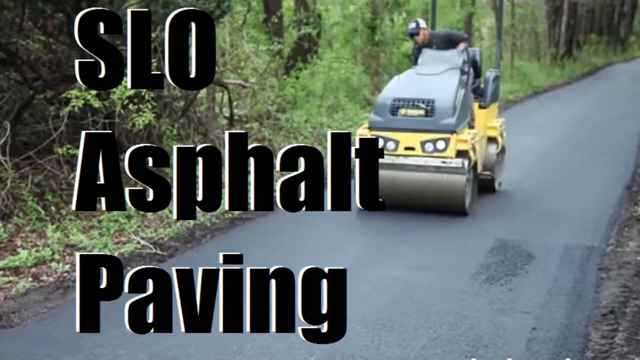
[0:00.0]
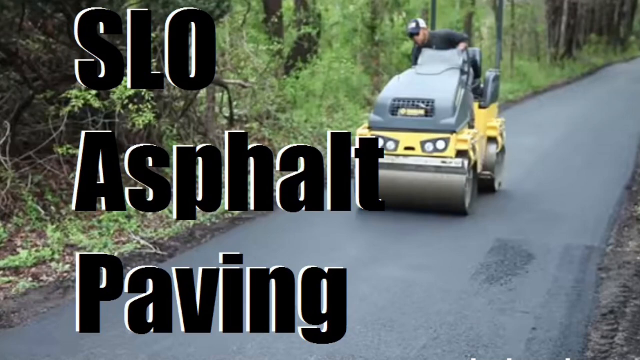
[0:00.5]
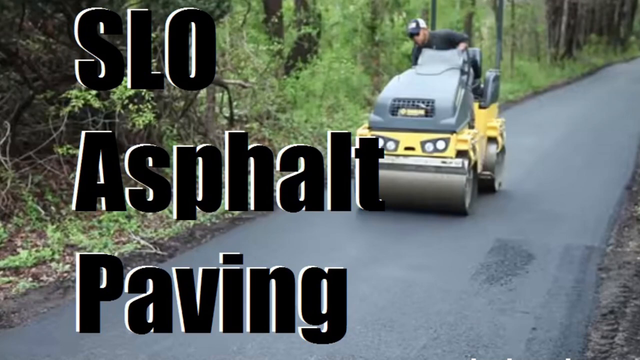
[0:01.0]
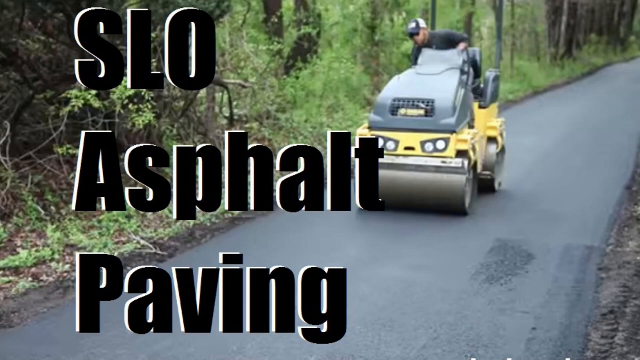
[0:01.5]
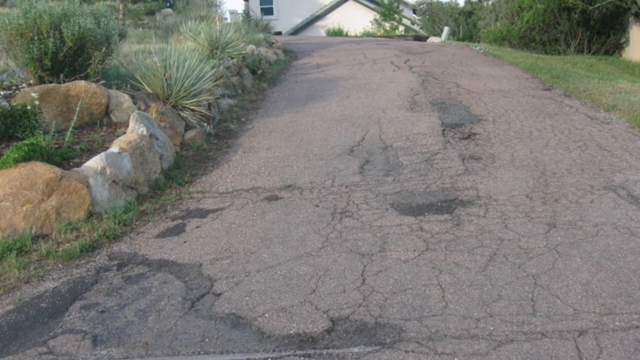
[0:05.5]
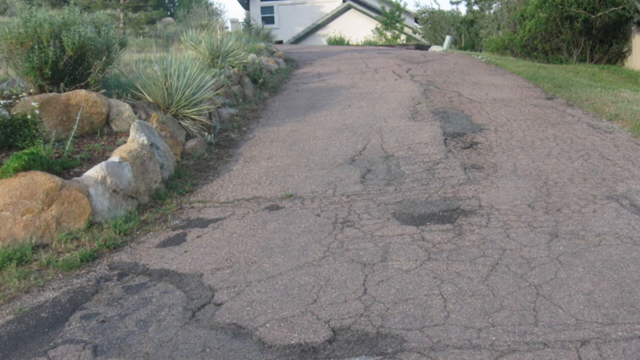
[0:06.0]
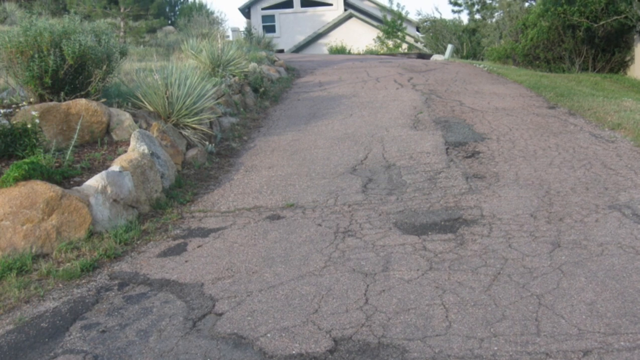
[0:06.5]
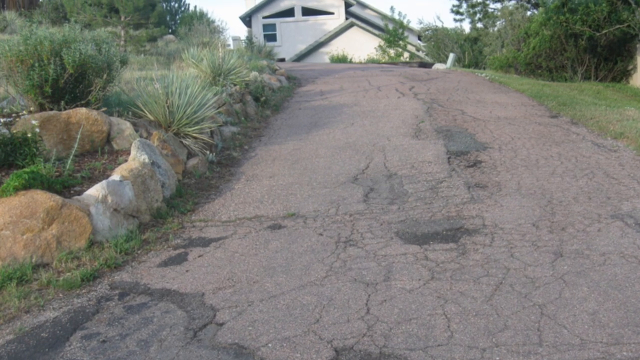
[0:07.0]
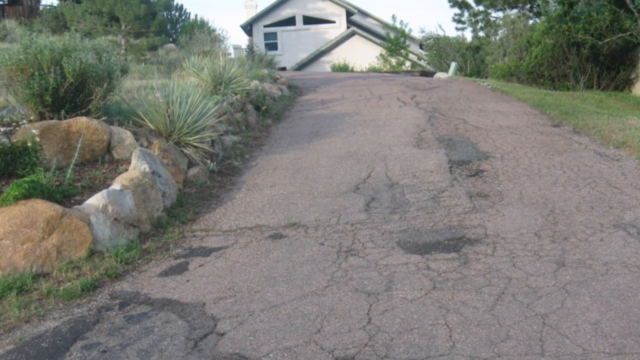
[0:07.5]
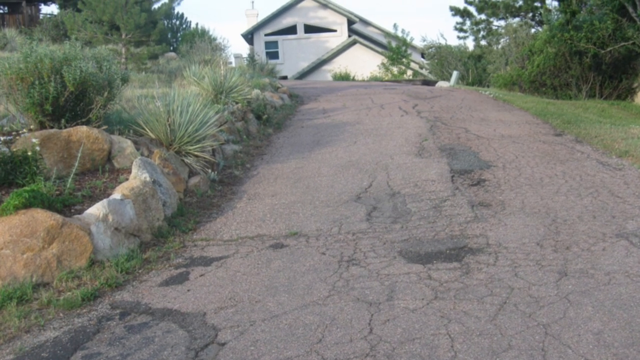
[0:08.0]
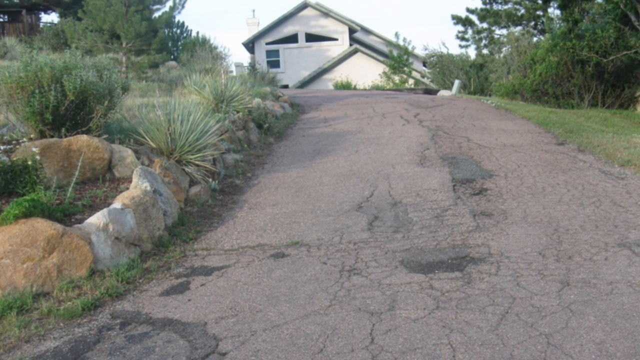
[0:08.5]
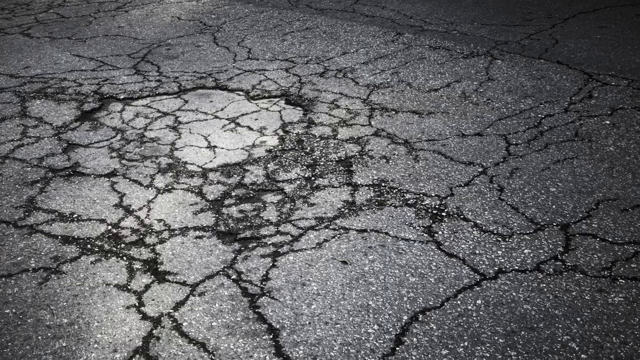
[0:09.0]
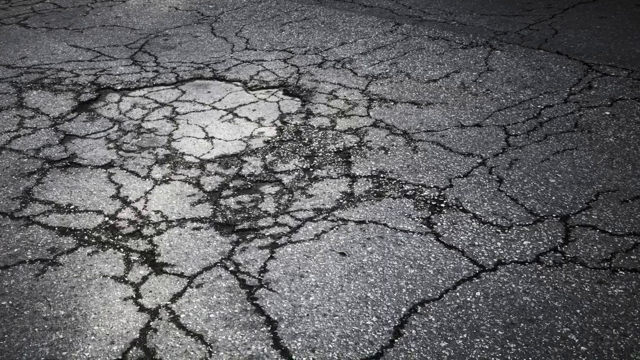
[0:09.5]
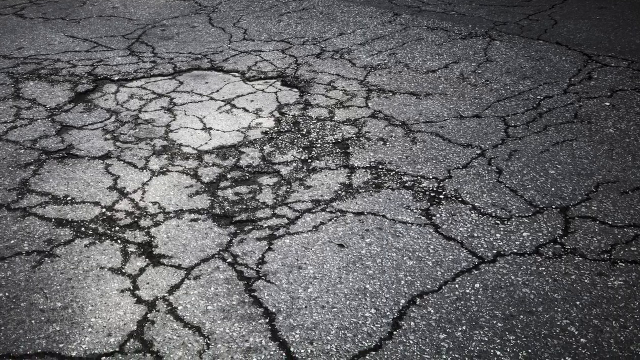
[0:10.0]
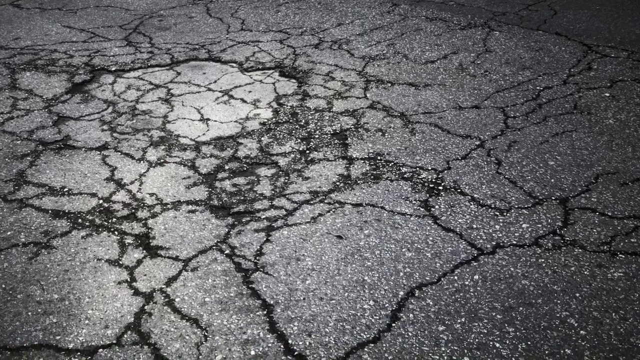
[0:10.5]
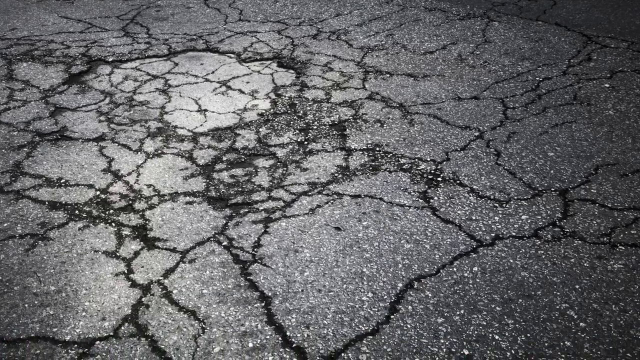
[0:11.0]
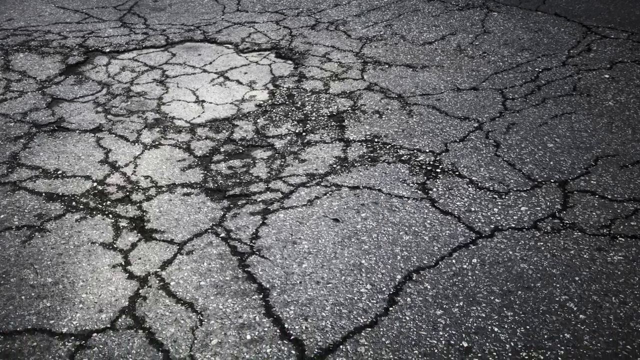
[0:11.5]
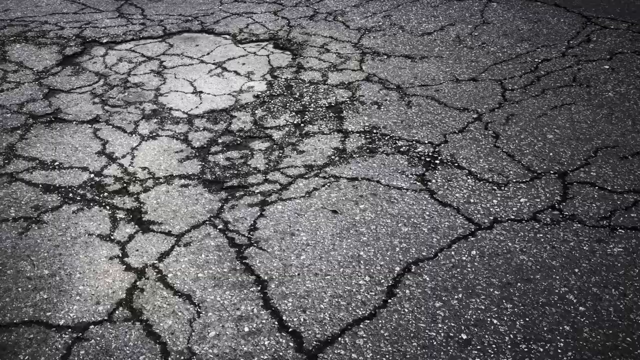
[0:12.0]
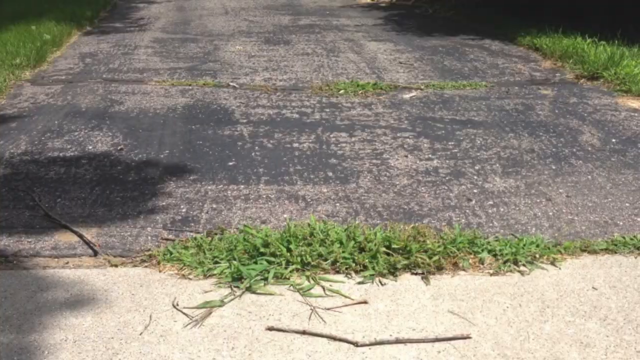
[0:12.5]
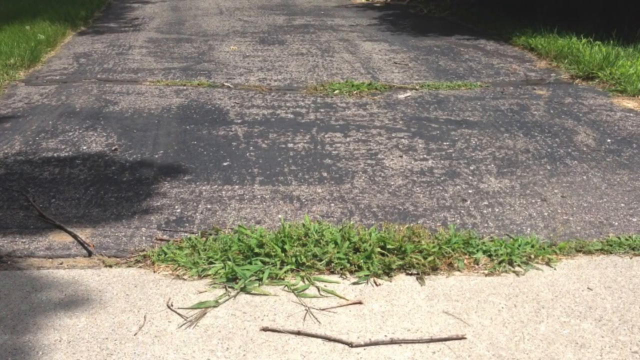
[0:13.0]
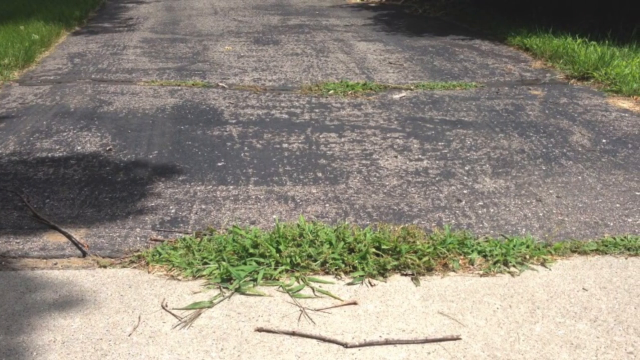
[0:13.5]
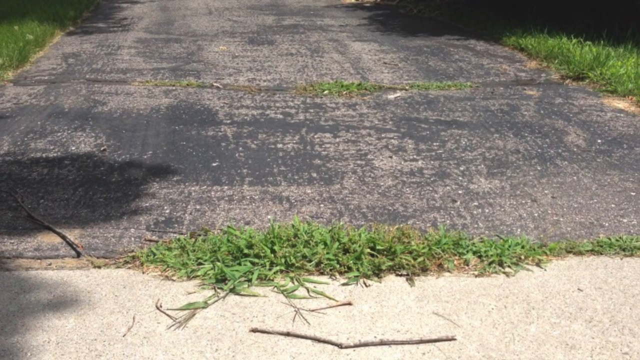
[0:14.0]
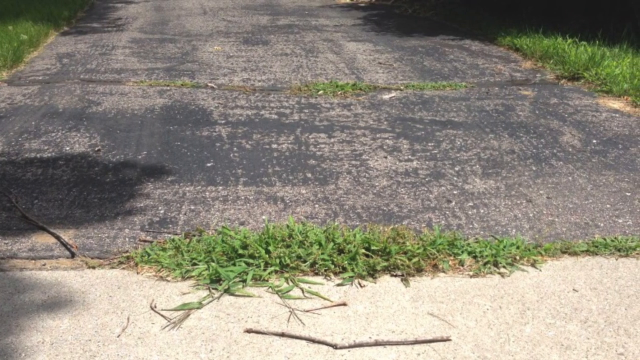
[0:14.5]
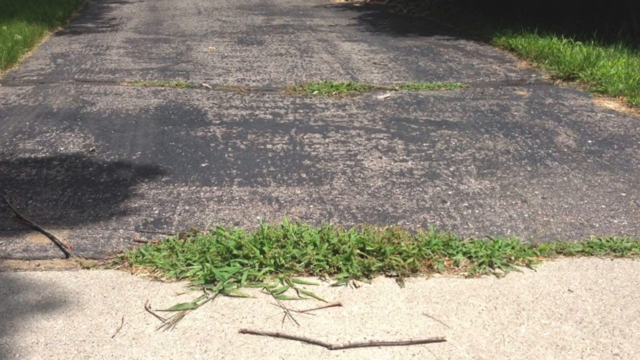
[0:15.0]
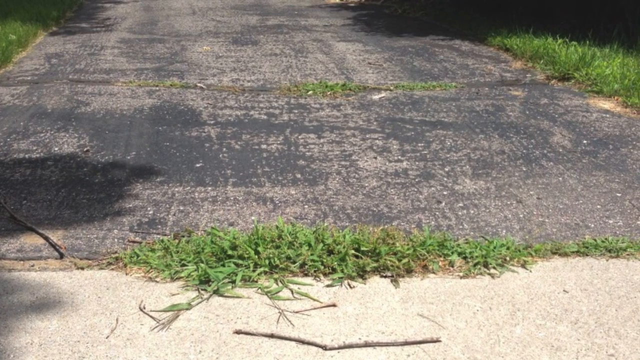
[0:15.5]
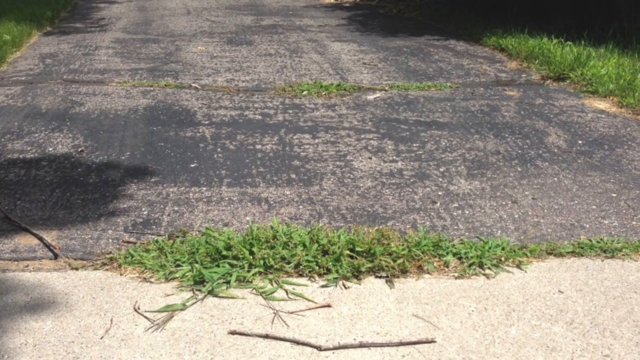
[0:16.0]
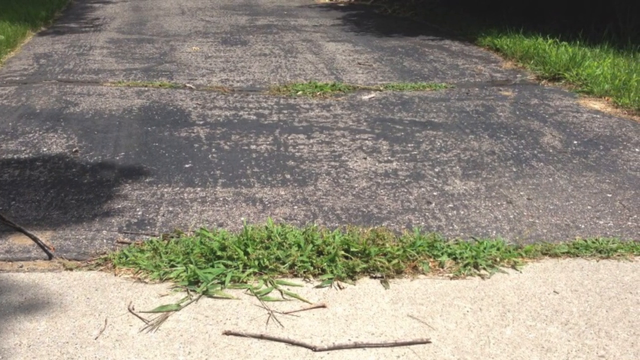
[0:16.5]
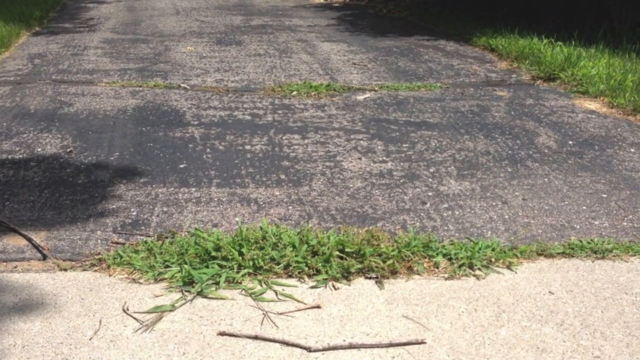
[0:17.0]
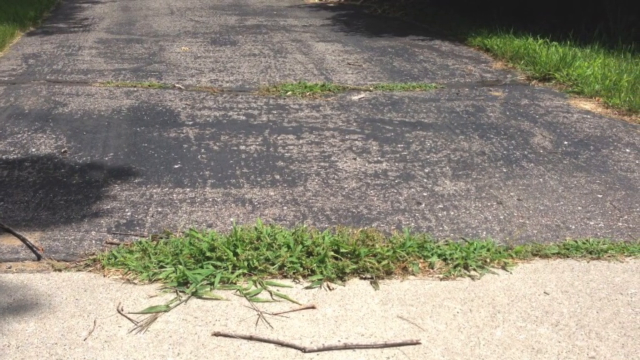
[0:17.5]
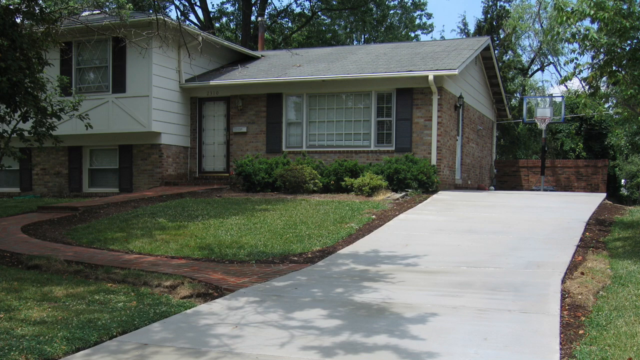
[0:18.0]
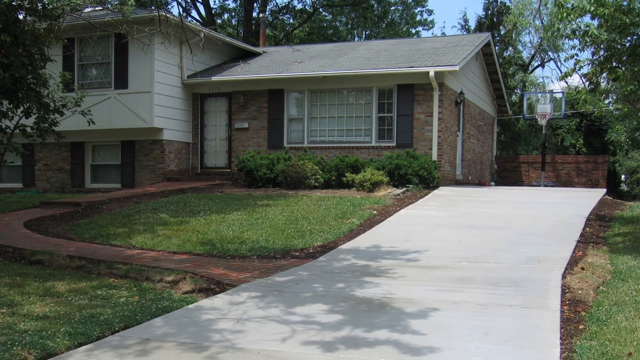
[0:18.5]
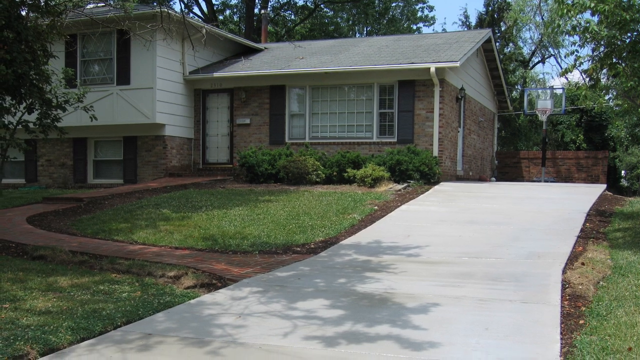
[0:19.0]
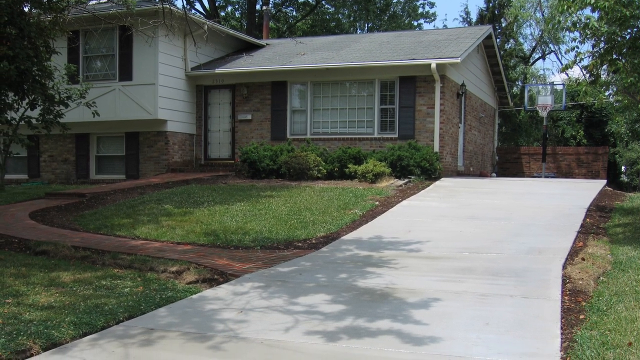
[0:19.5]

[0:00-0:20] A road, a house and trees are visible. The tarred road is not smooth. There is grass inside the premises, and the house is double-storey. Workers are trying to fix the road, and a machine used to make the tarred road is visible. The house appears to be on a hill rather than on flat ground. A man wearing a cap and dressed in black is on the machine that is making the tarred road smooth. There are a lot of bushes and big green trees.